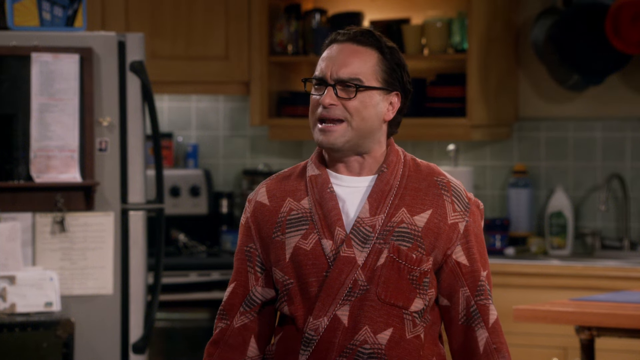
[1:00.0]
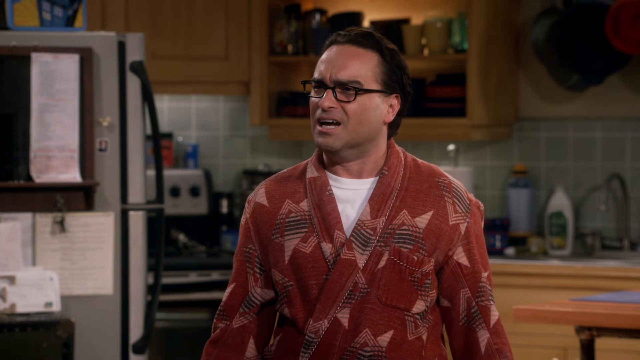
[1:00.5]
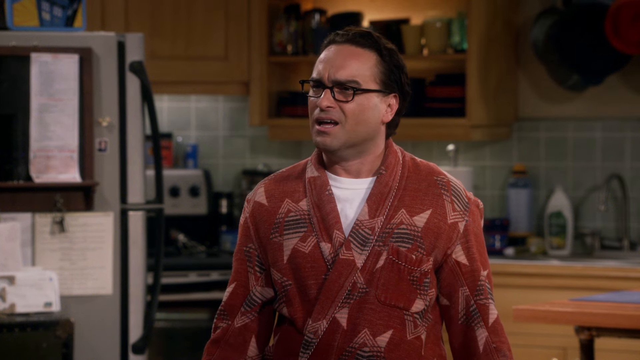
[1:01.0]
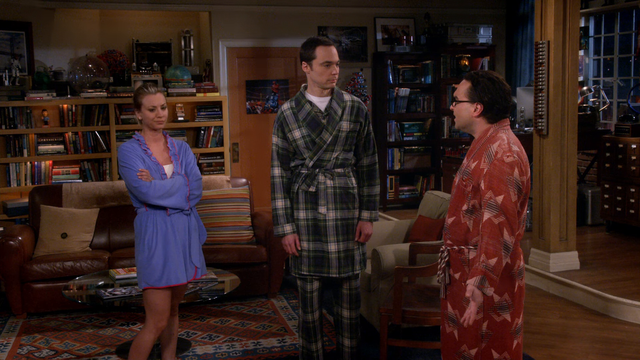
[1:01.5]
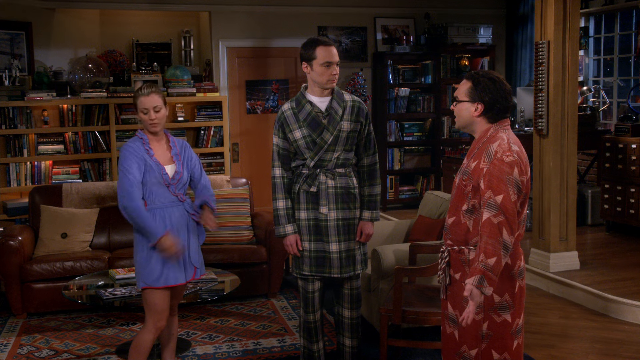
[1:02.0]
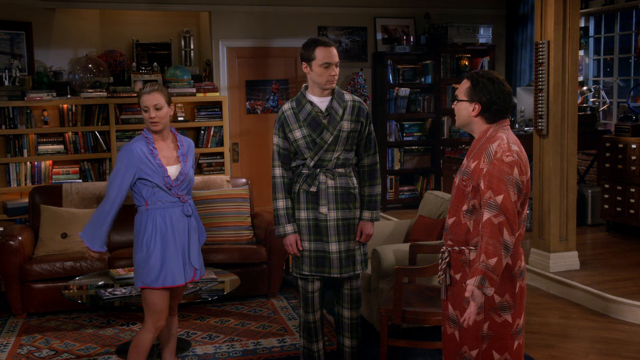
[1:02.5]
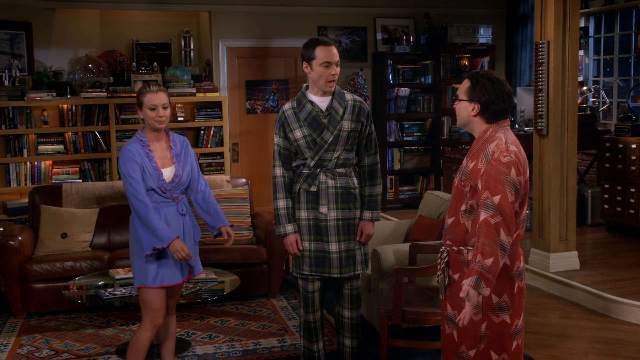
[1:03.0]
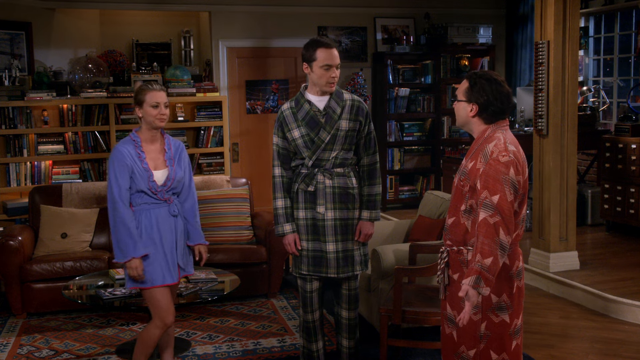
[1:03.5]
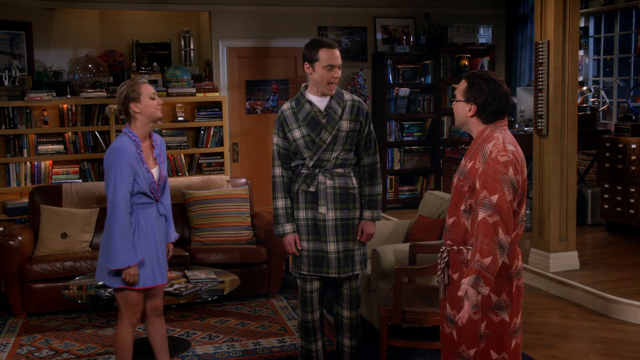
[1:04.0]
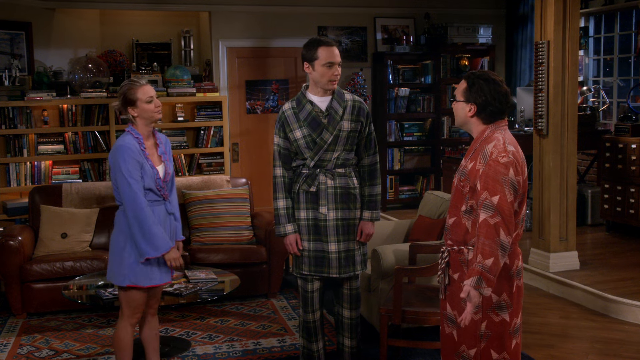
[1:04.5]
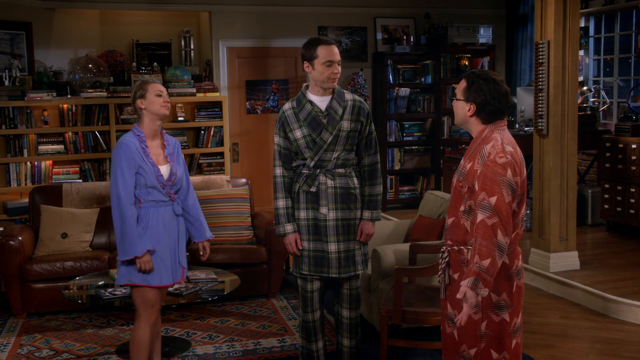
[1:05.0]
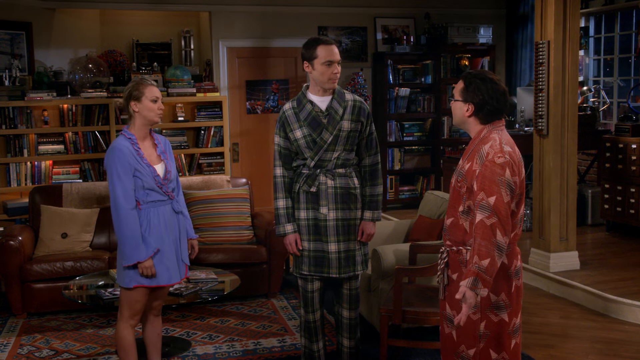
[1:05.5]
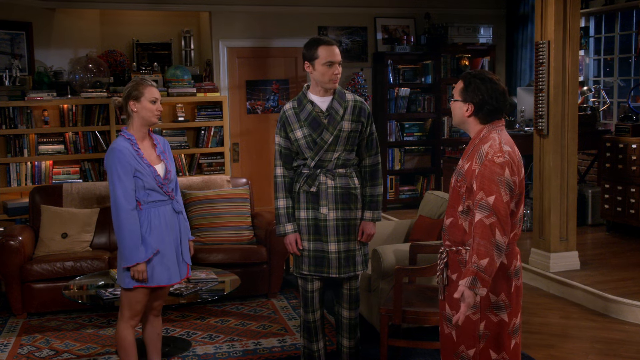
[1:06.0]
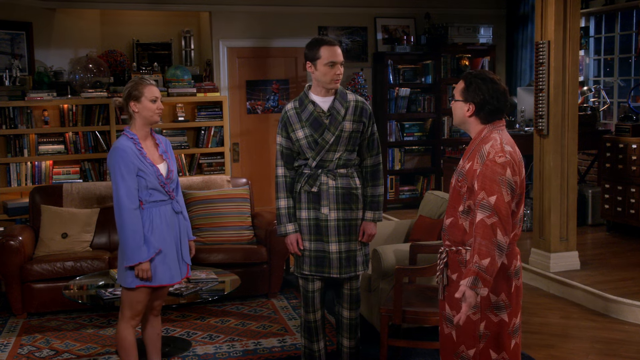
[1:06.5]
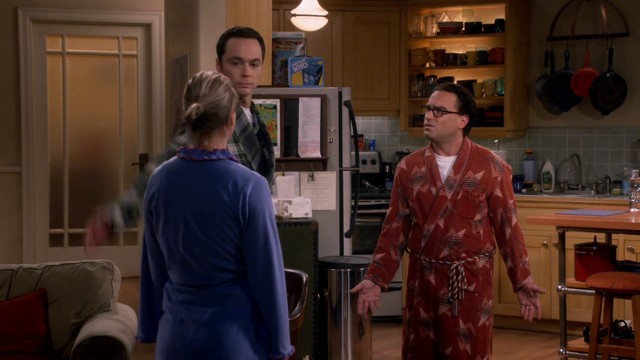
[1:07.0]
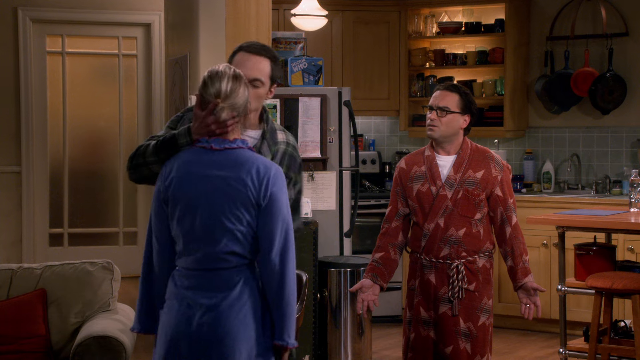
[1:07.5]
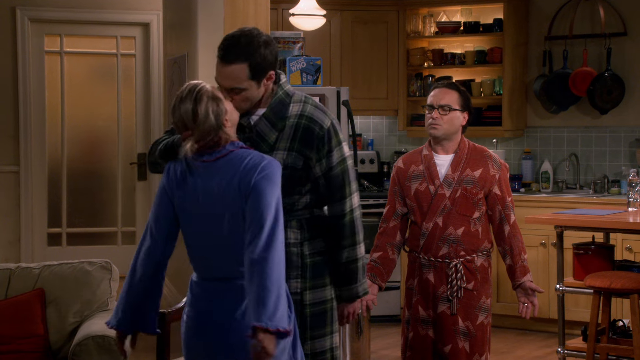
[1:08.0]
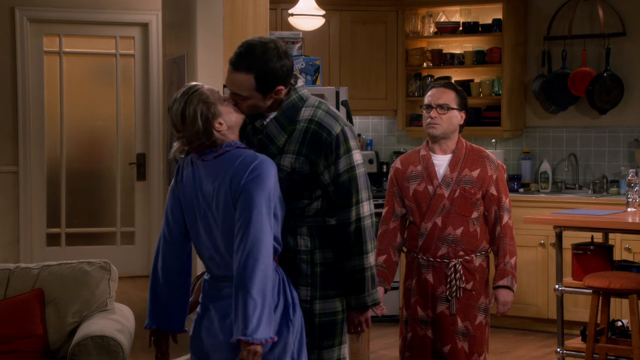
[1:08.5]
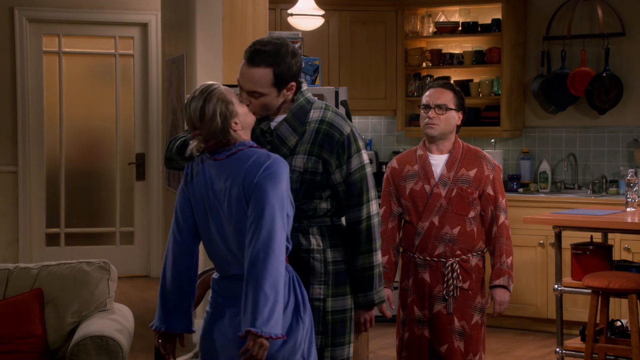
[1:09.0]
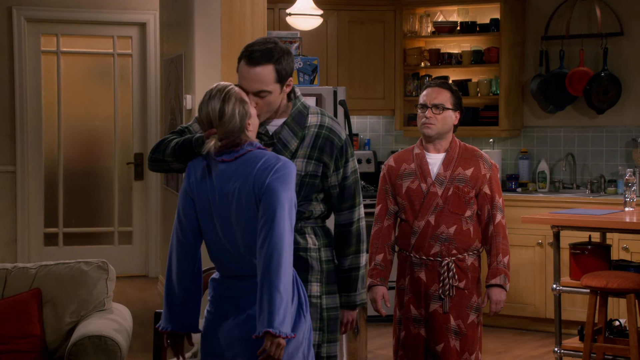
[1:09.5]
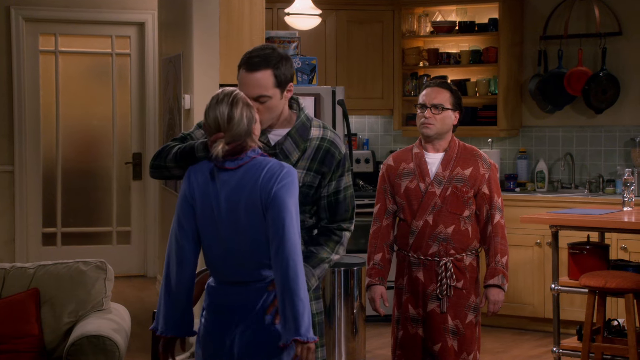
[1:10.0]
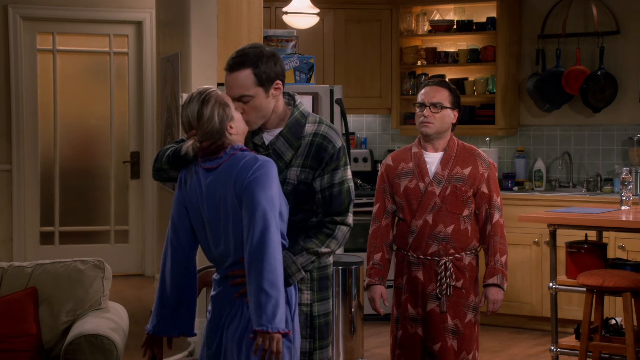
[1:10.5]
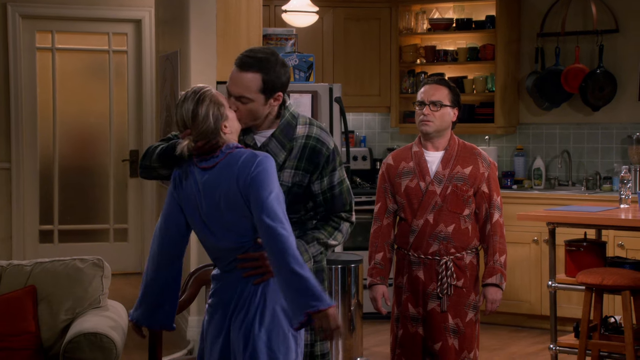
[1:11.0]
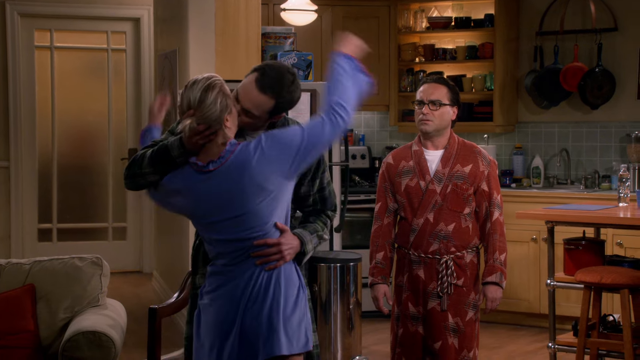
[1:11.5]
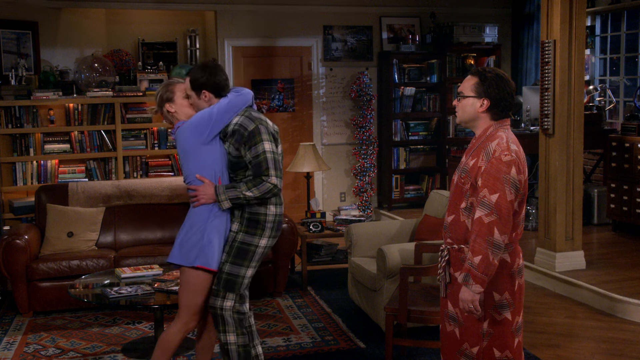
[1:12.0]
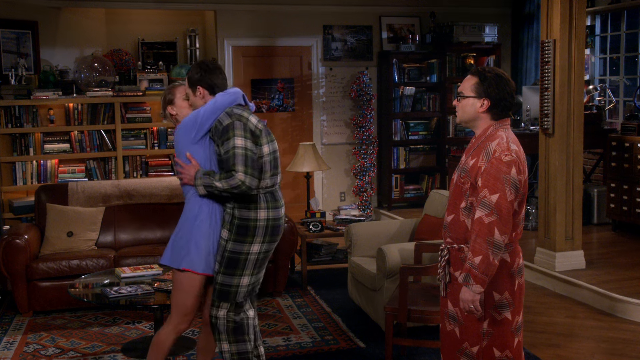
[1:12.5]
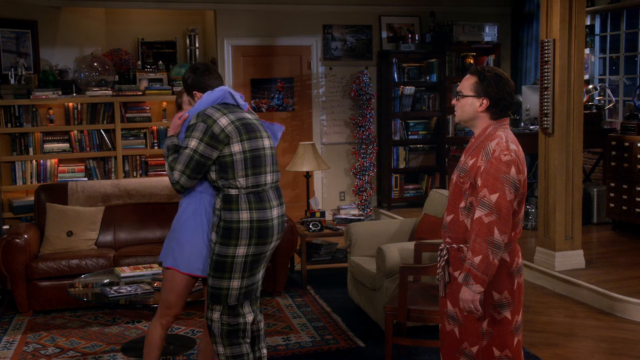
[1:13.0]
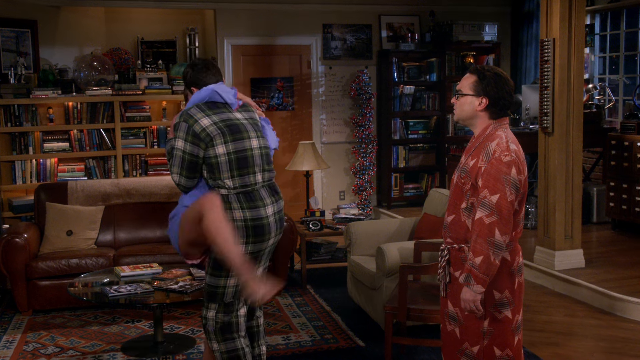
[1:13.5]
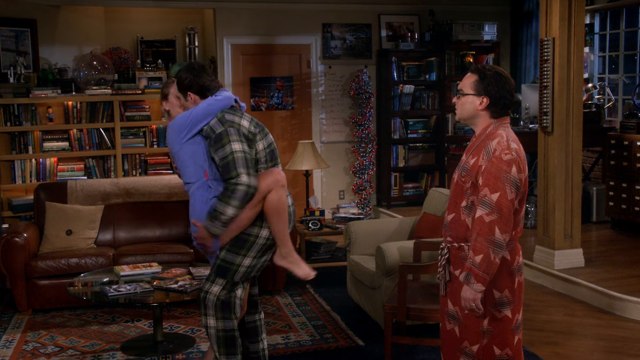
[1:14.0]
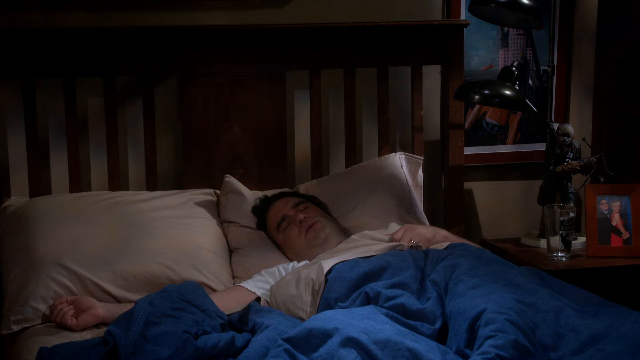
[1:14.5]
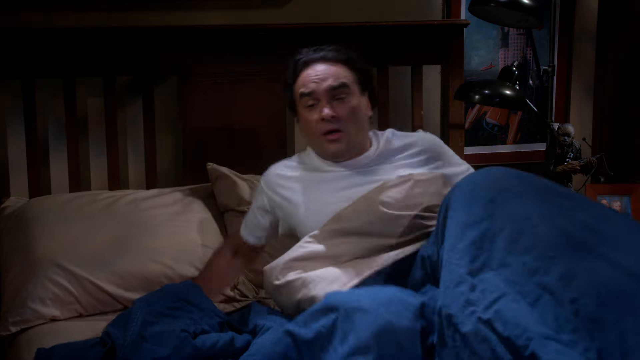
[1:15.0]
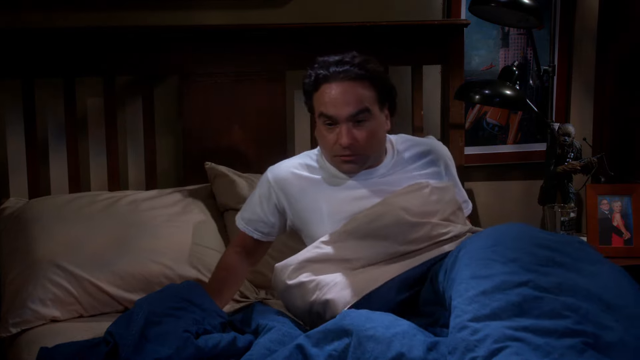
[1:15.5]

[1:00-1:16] The shorter man in the rust-colored robe looks like he is finally standing up for himself, seemingly speaking angrily toward the taller man in the plaid robe. The man in the plaid robe has both arms down at his sides with his palms facing his upper thighs. The woman is to his right, in a purple robe with what looks like something white underneath; she is possibly a tenant in the same building. She looks over to her right side with her arms down at her sides, then swings both arms back and forth, seemingly sick of the conversation. The tall man in the plaid robe grabs the woman, pulls her toward him and kisses her. She looks very shocked and not expecting it; her head is tilted back up to the man as they kiss, her arms are behind her body and her pelvis is pulled in toward him. The other man is in the back room, looking on.